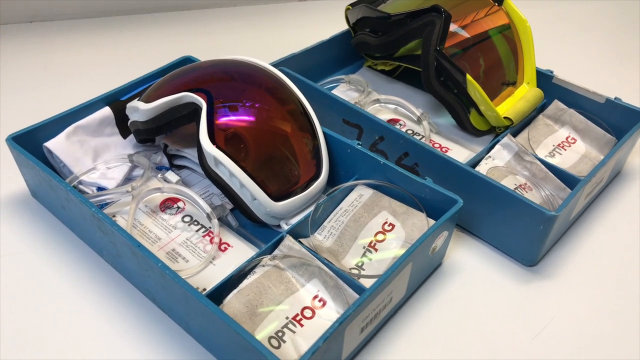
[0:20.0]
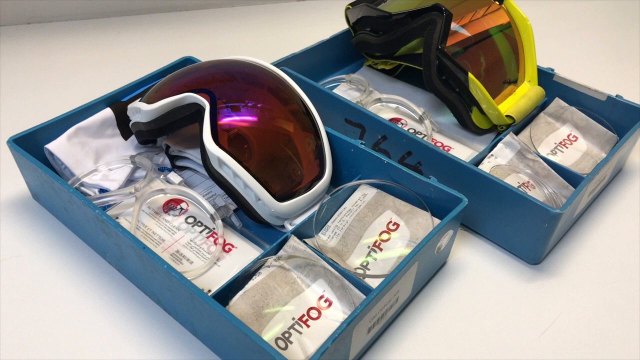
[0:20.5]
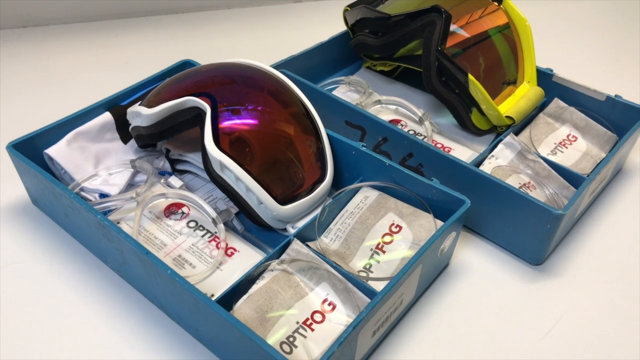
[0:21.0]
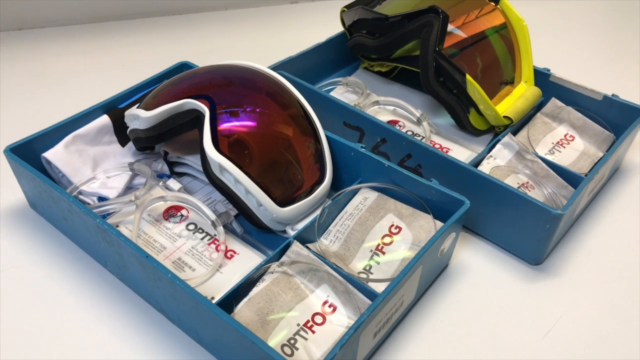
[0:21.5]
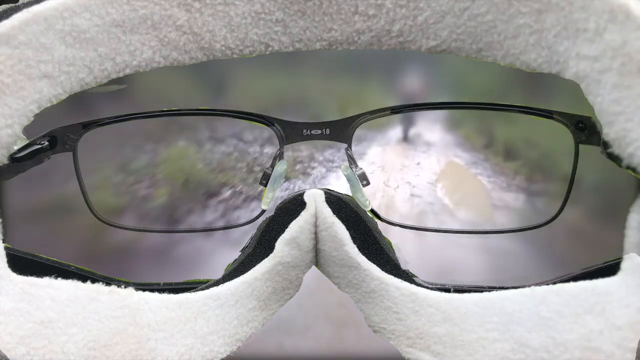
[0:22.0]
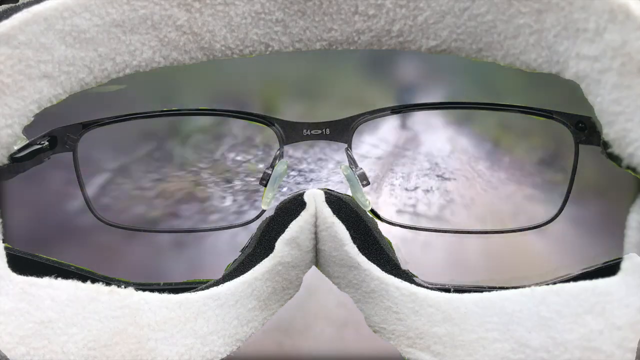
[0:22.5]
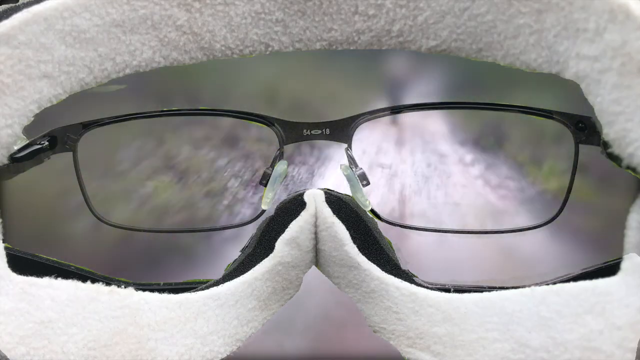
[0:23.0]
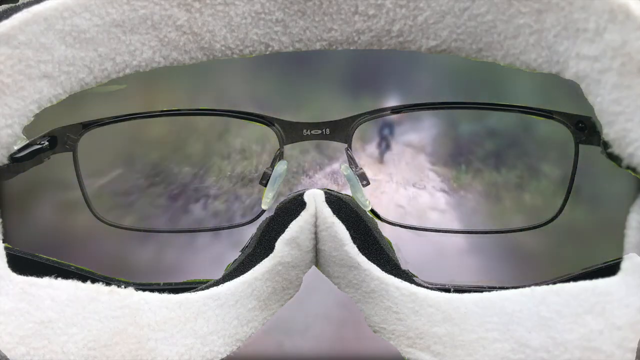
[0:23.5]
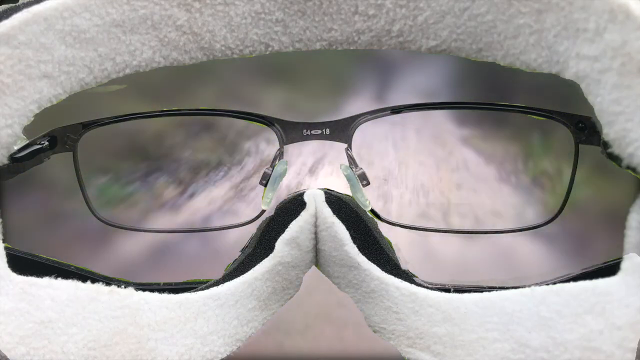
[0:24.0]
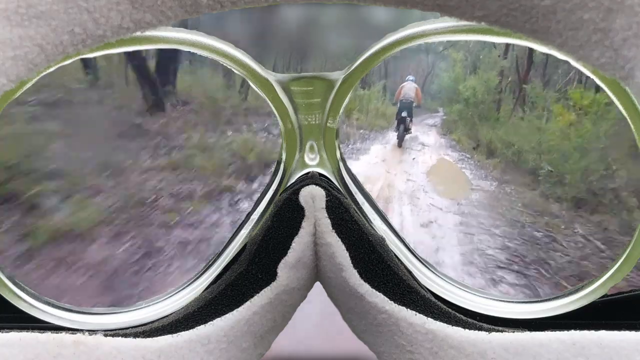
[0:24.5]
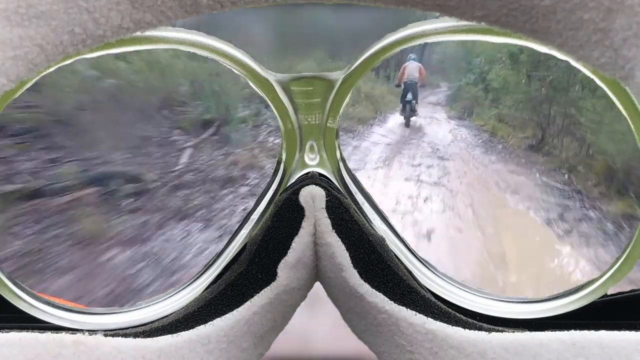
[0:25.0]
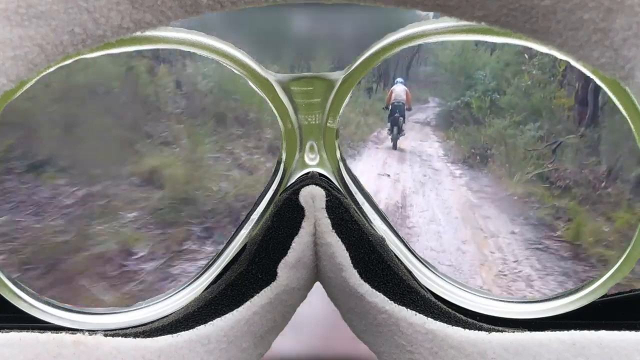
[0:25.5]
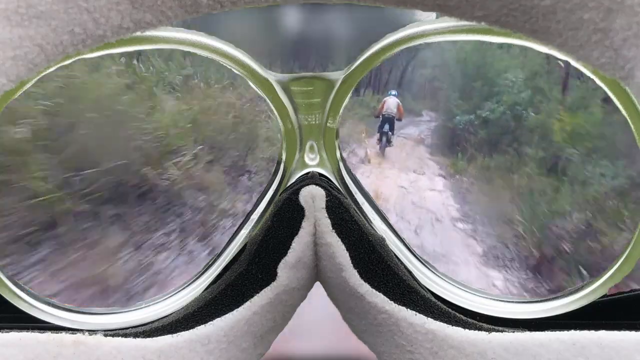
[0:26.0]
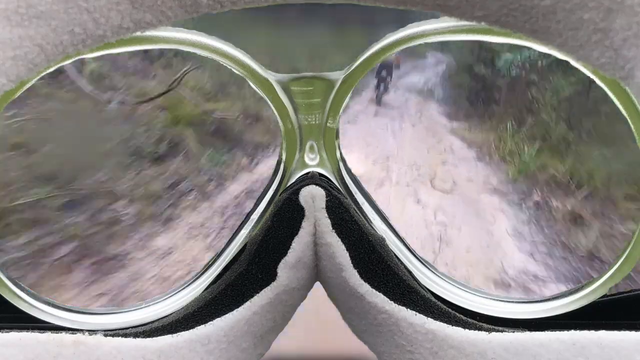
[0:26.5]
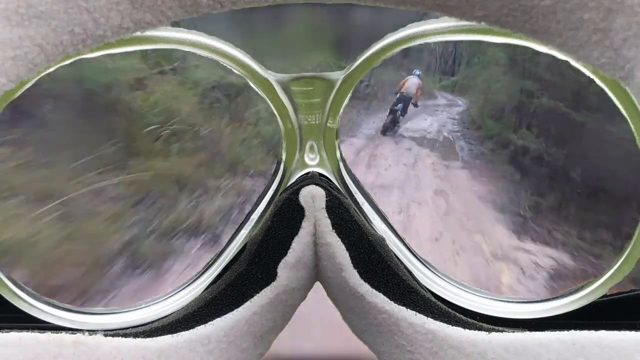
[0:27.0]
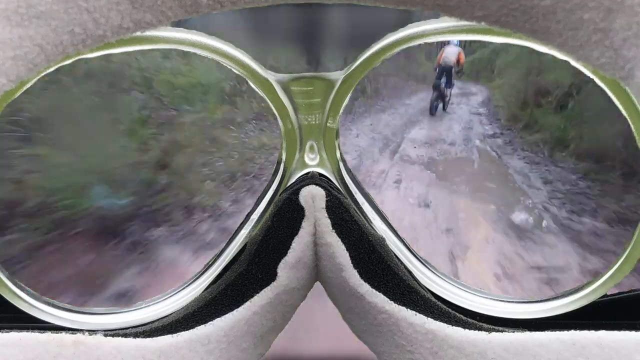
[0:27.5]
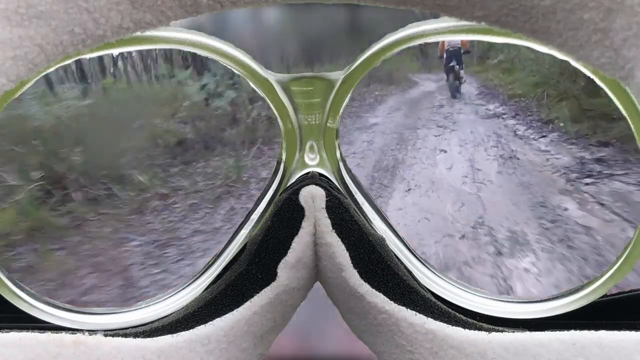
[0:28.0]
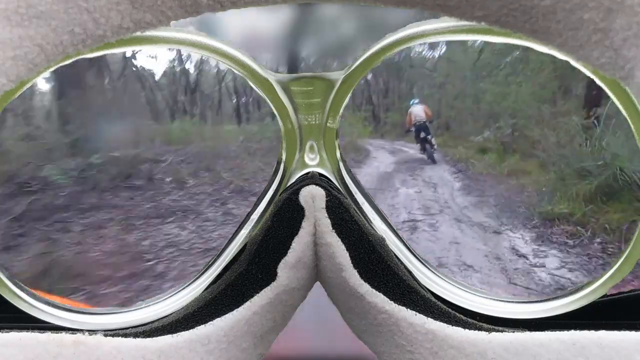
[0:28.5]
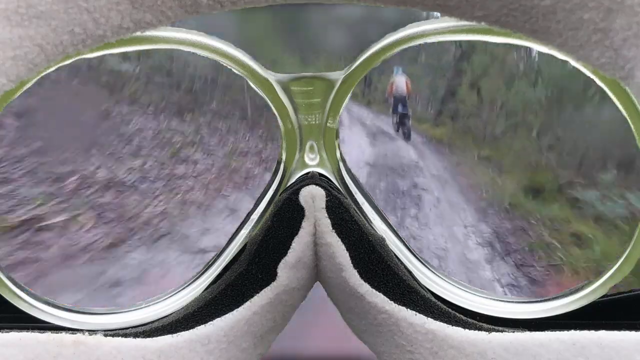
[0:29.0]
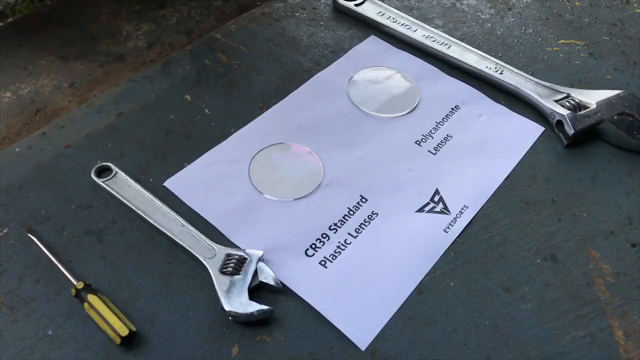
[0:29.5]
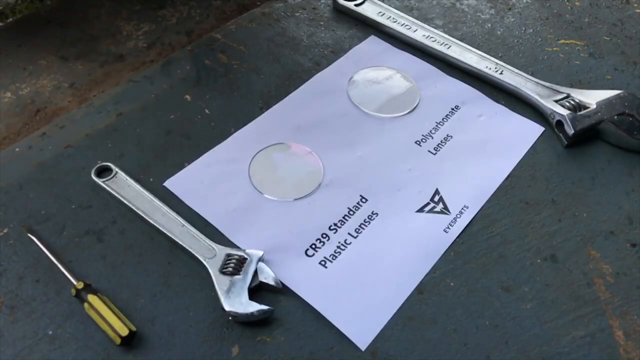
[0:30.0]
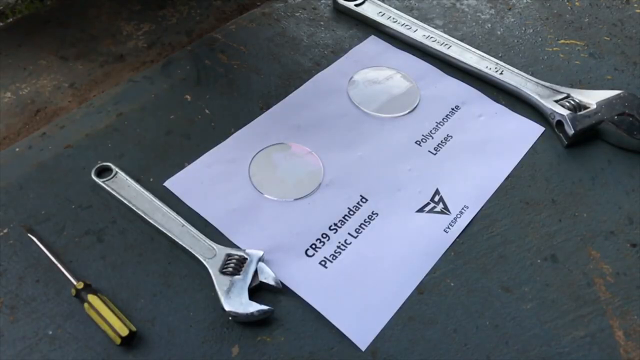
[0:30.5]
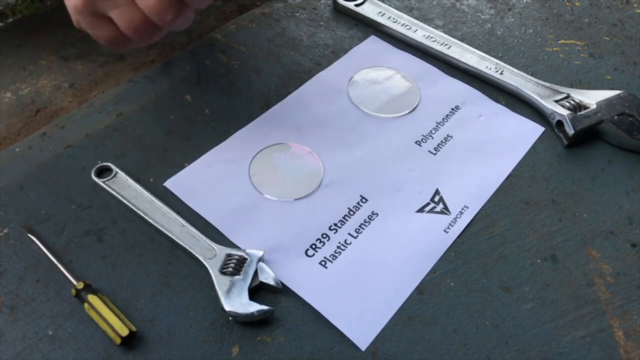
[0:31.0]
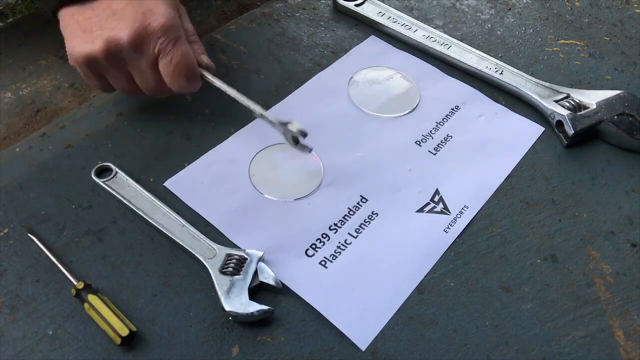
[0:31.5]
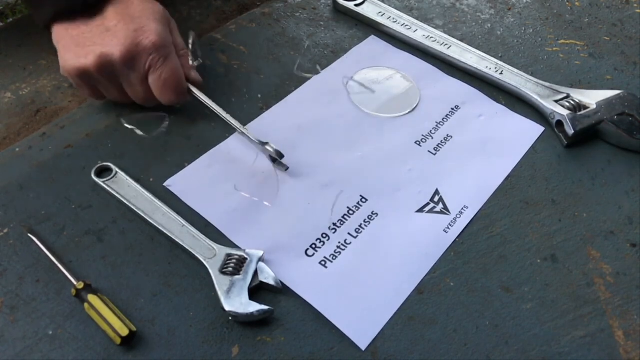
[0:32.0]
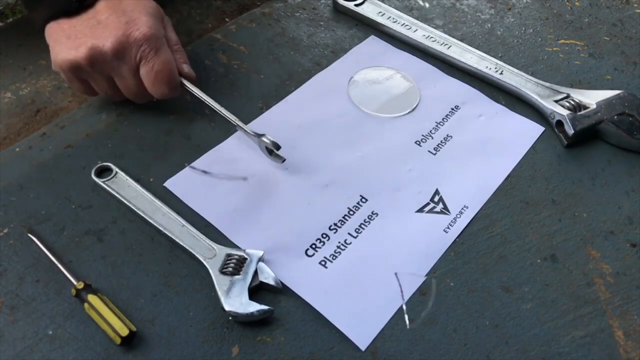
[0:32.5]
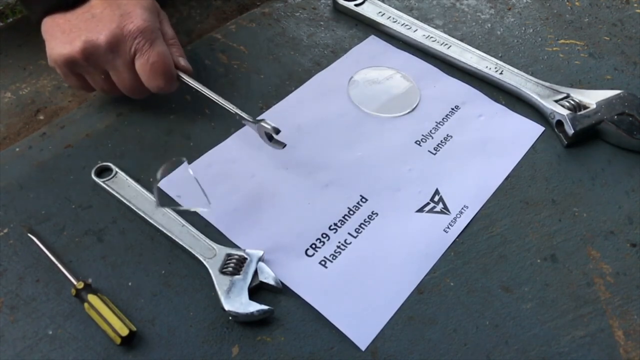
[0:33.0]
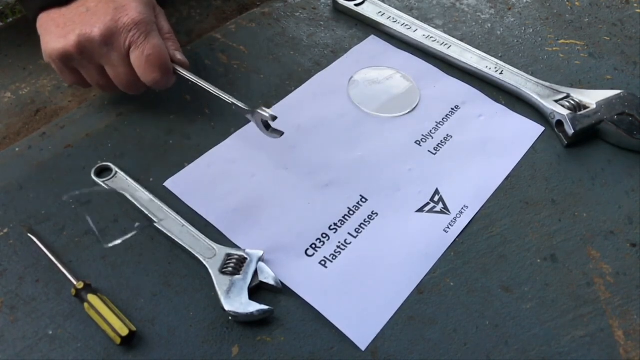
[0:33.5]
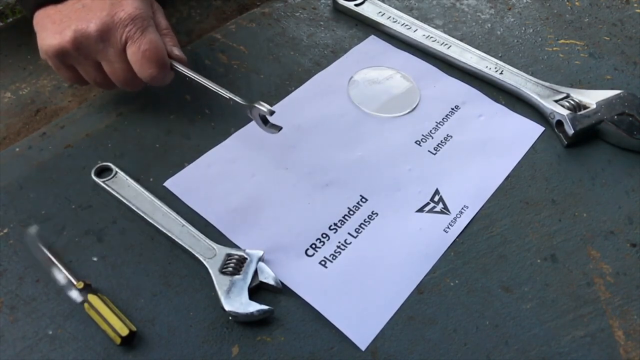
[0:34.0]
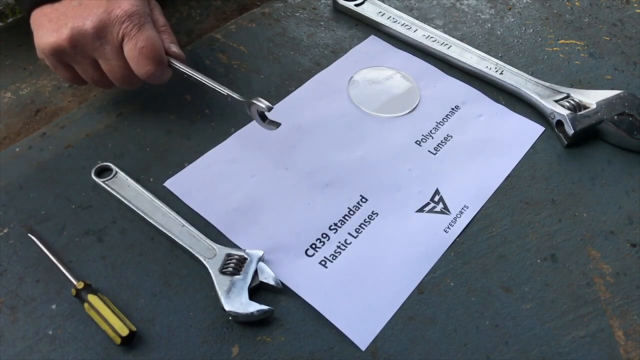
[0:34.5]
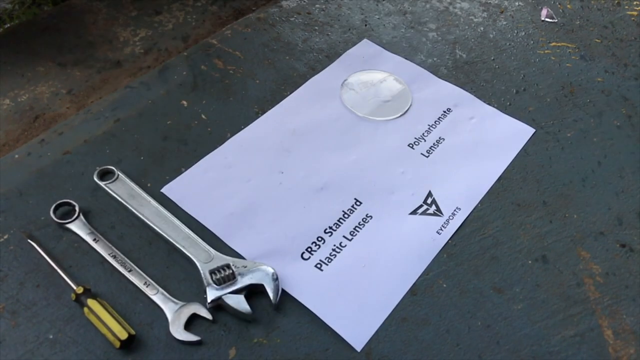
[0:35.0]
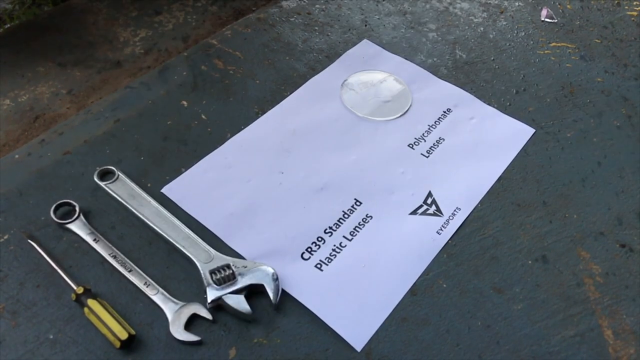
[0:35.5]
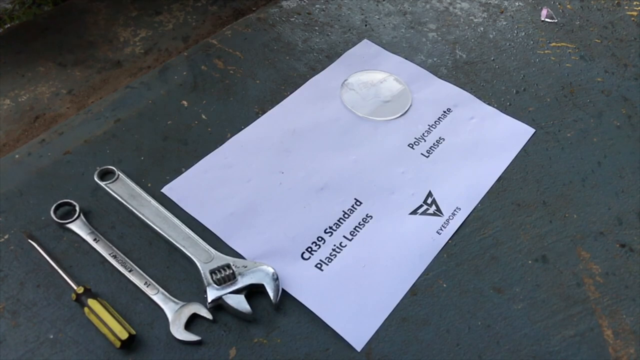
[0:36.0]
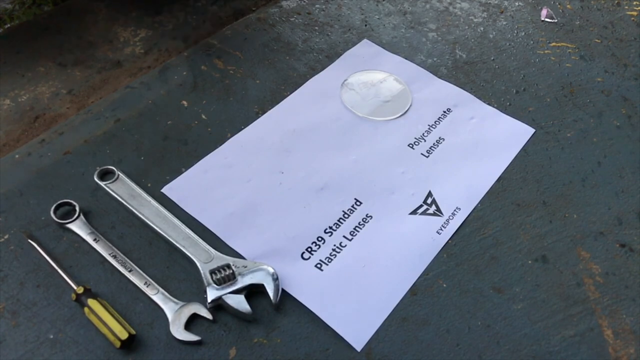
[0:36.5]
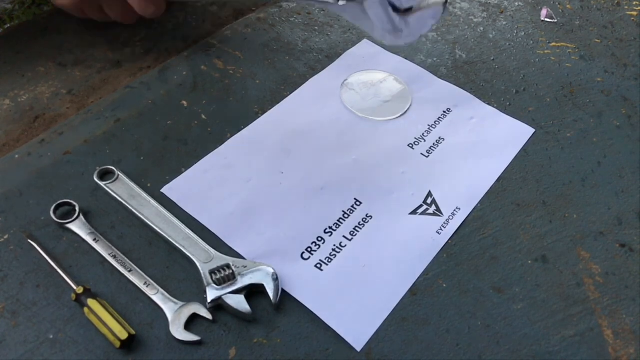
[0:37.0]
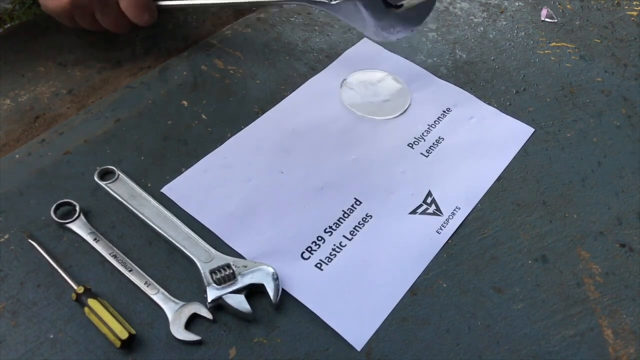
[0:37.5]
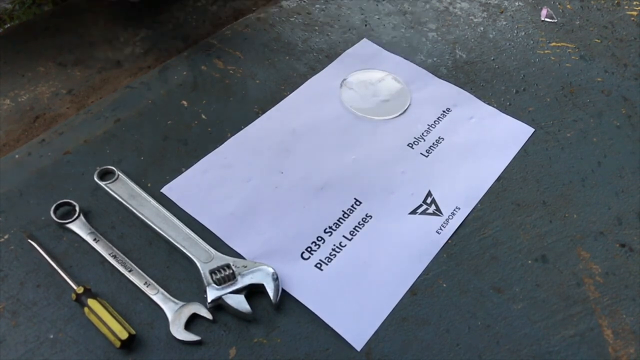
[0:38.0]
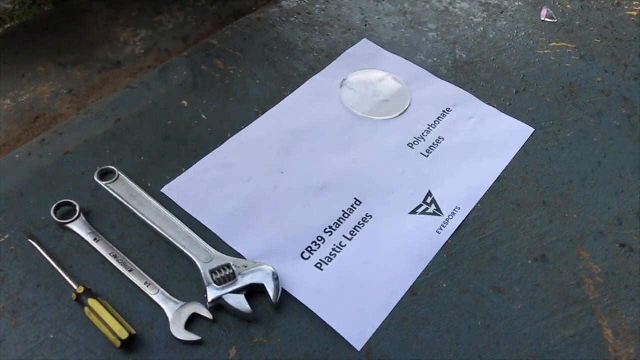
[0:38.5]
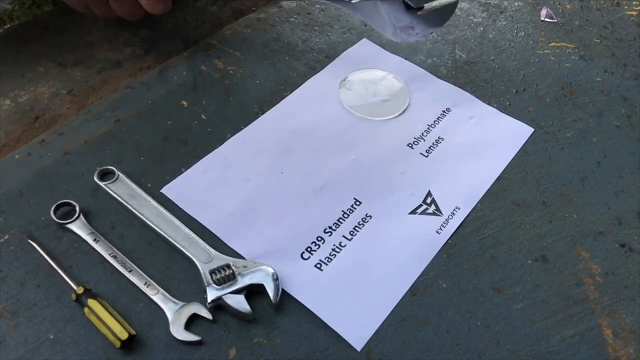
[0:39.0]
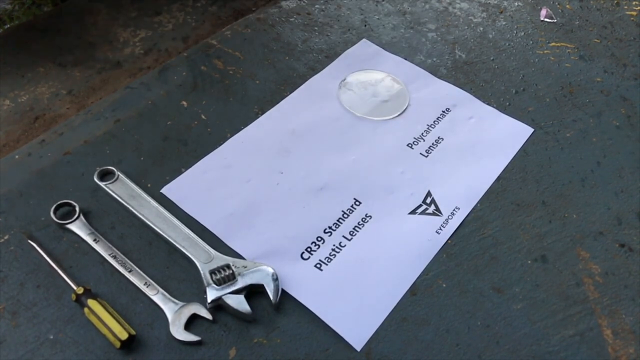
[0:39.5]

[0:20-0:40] A close-up of the eyewear is followed by a first-person perspective of someone wearing the goggles, with one rider in front of them on a dirt bike, wearing a helmet and a shirt in full attire. Through the goggles, there almost looks to be an inner lens with a prescription or glasses-type look, plus an outer protective layer. A close-up then shows two wrenches and a screwdriver with "CR3C standard plastic lens" and "polycarbonate lens" on what almost looks like a piece of paper bearing the iSports logo and text. A standard lens is broken with a wrench, showing that their special lenses do not break so easily; only the arm and hand of the person holding the wrench are visible.